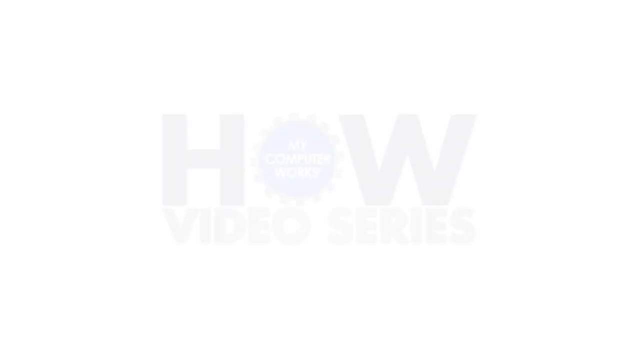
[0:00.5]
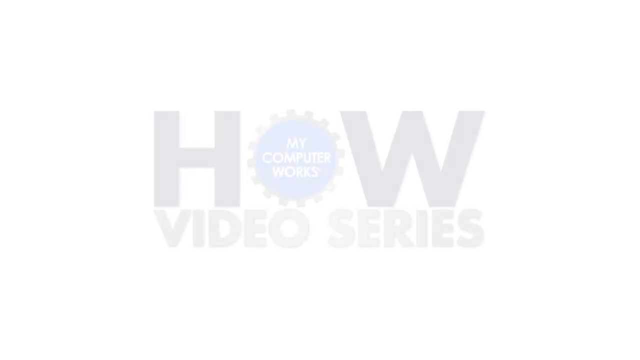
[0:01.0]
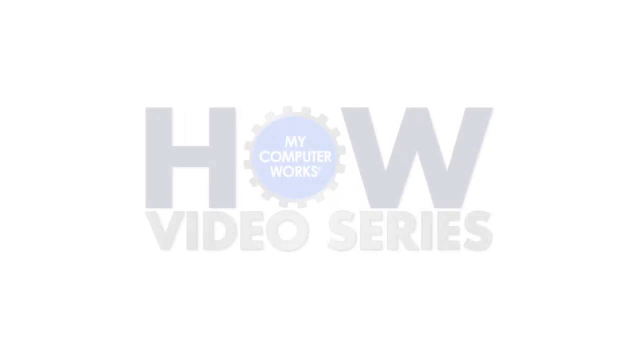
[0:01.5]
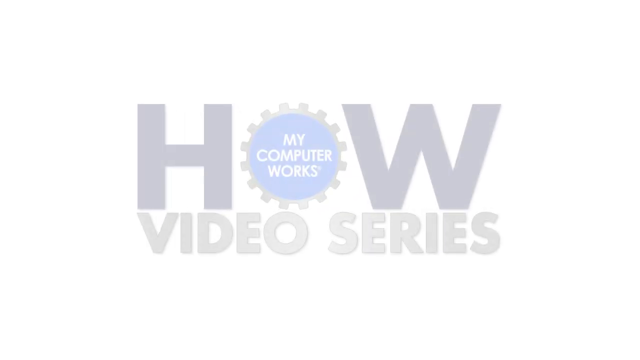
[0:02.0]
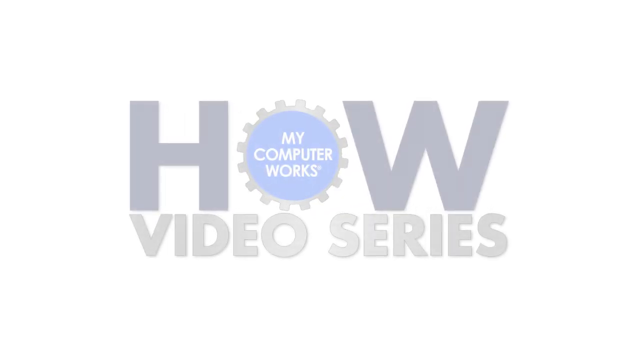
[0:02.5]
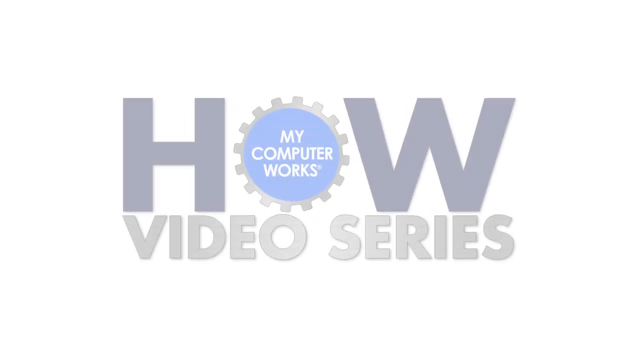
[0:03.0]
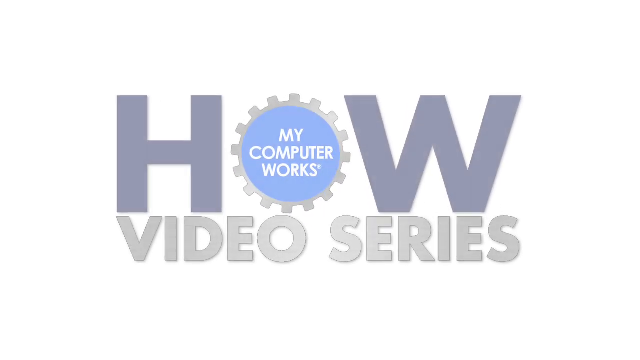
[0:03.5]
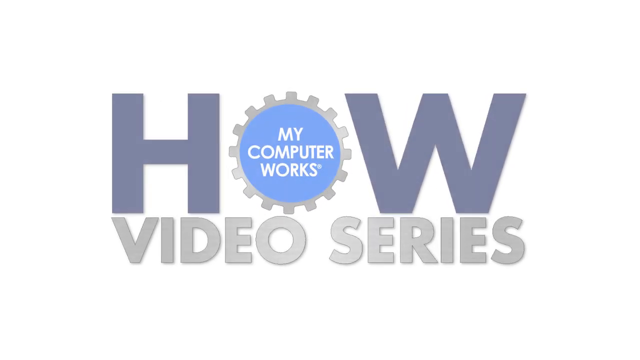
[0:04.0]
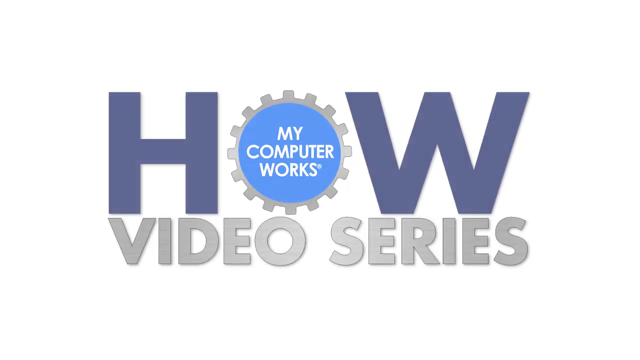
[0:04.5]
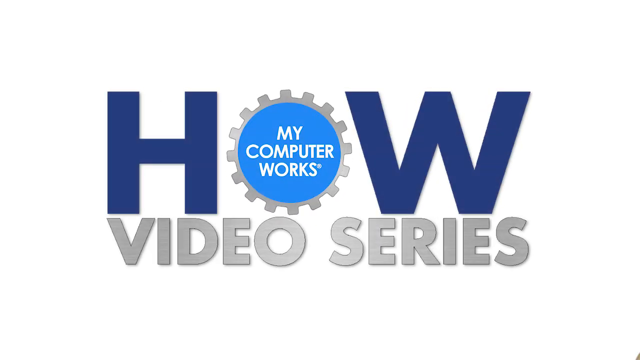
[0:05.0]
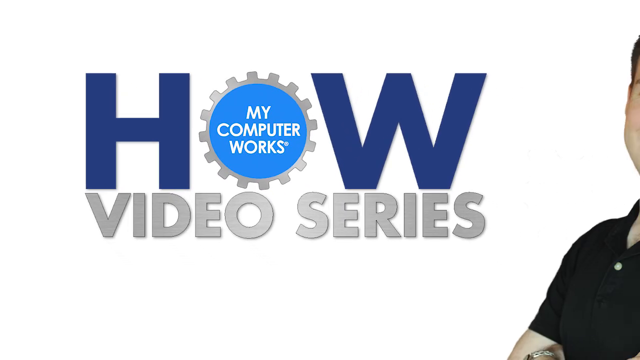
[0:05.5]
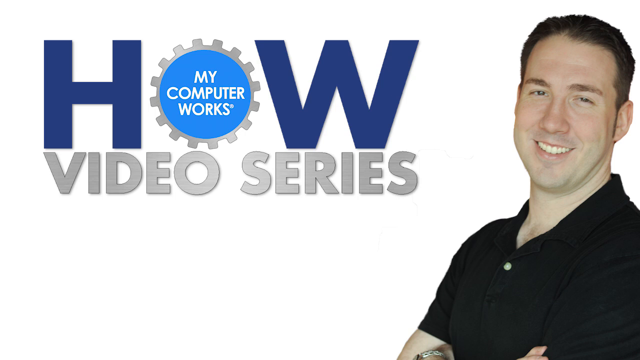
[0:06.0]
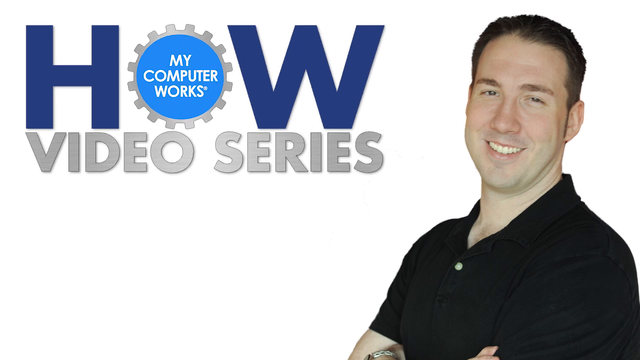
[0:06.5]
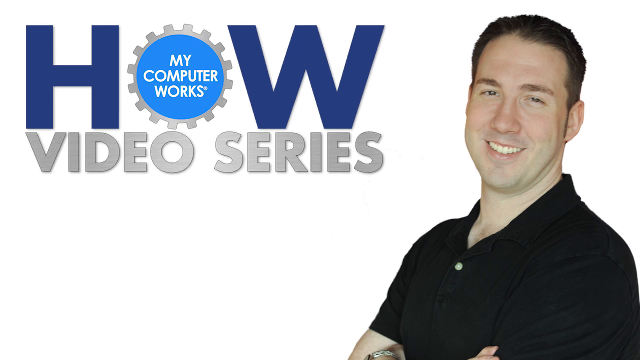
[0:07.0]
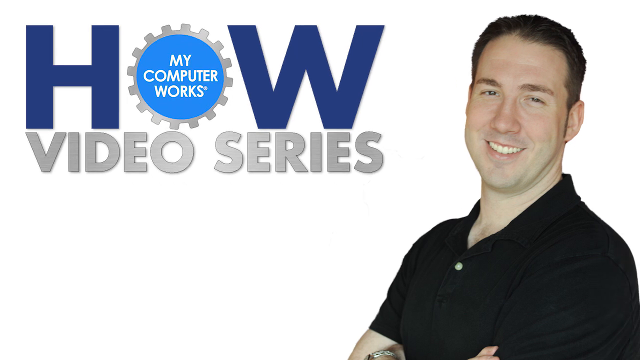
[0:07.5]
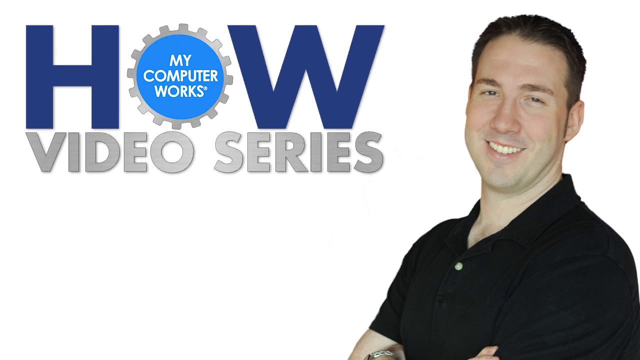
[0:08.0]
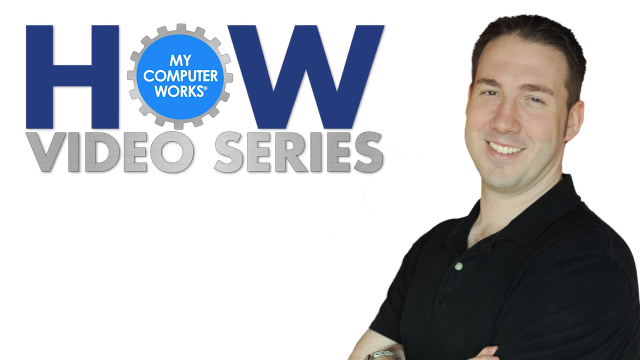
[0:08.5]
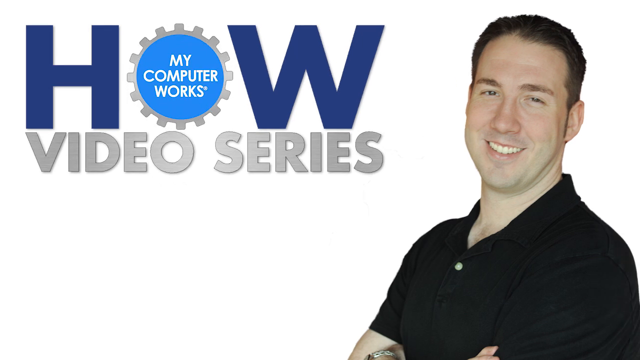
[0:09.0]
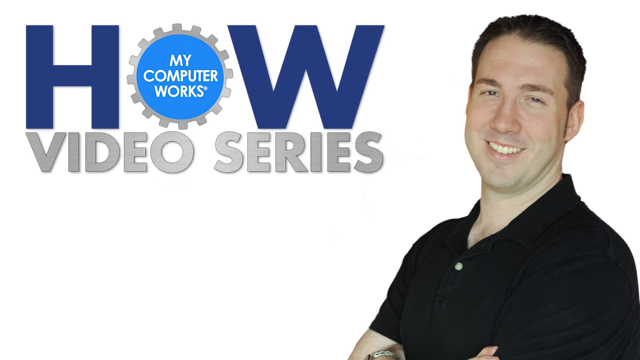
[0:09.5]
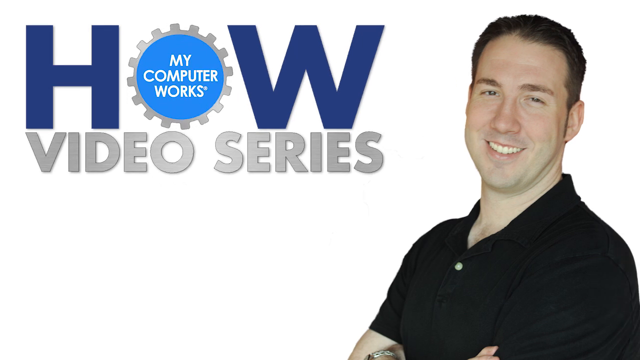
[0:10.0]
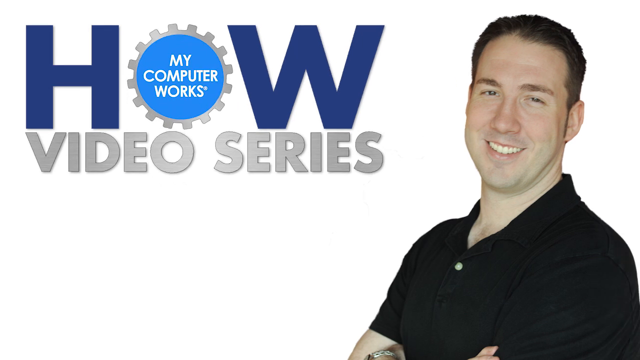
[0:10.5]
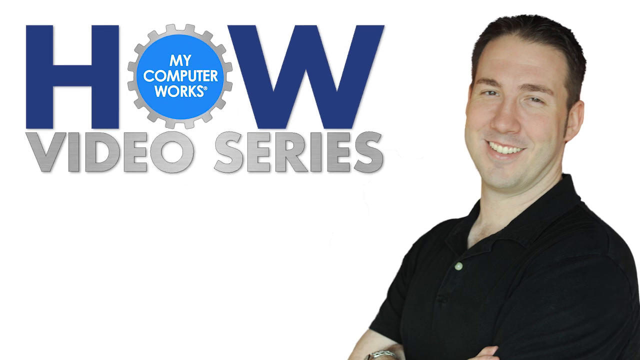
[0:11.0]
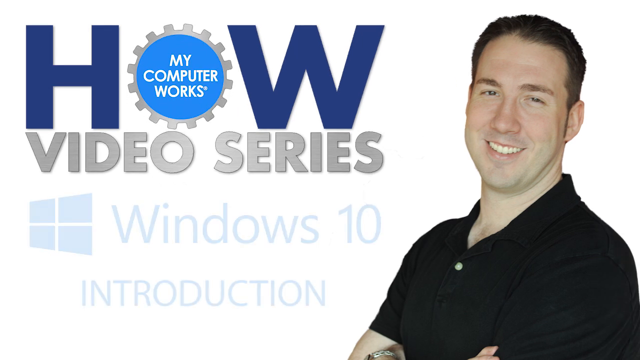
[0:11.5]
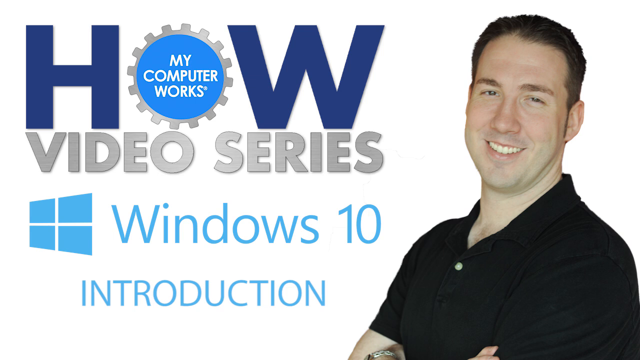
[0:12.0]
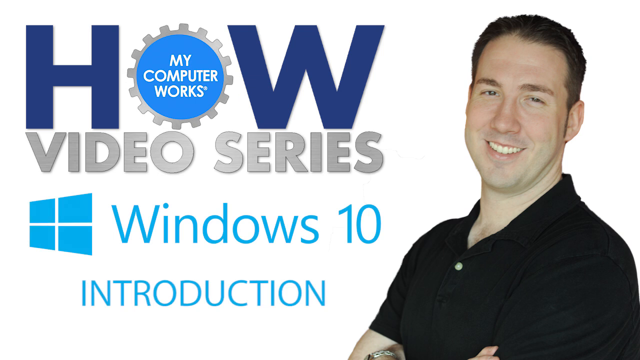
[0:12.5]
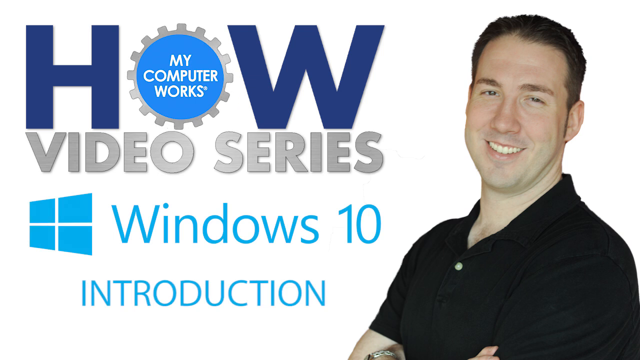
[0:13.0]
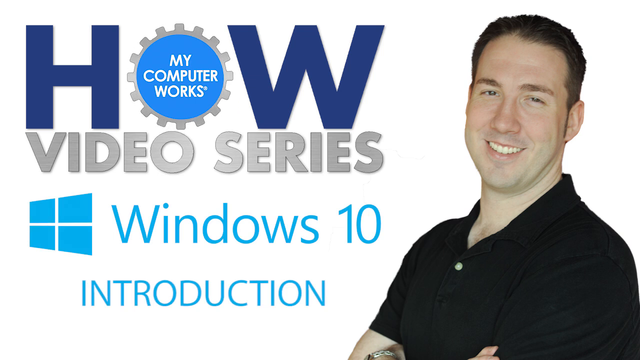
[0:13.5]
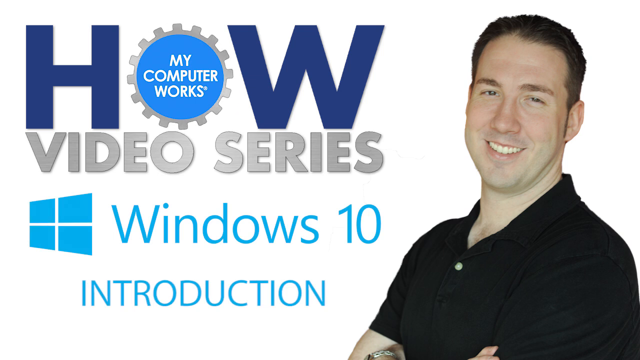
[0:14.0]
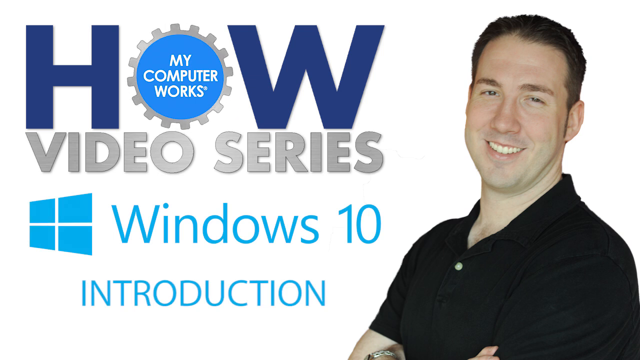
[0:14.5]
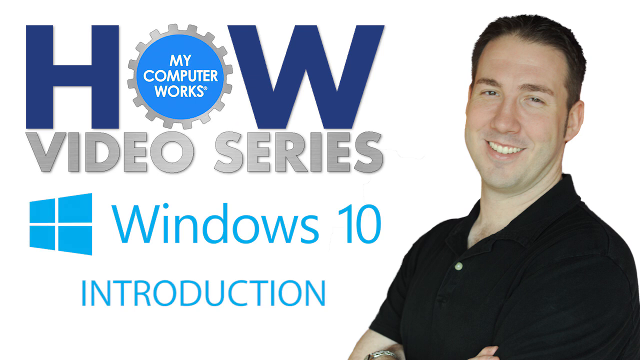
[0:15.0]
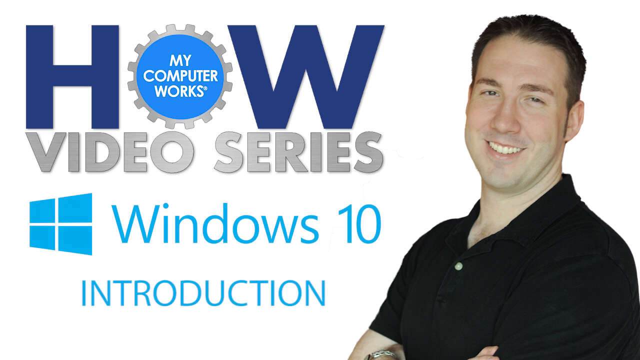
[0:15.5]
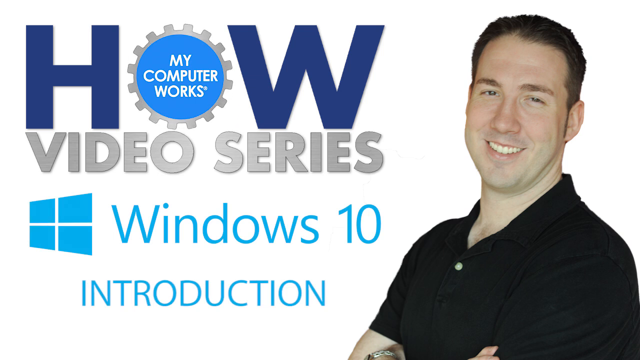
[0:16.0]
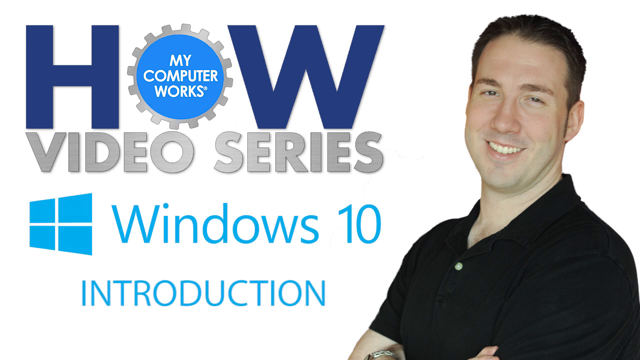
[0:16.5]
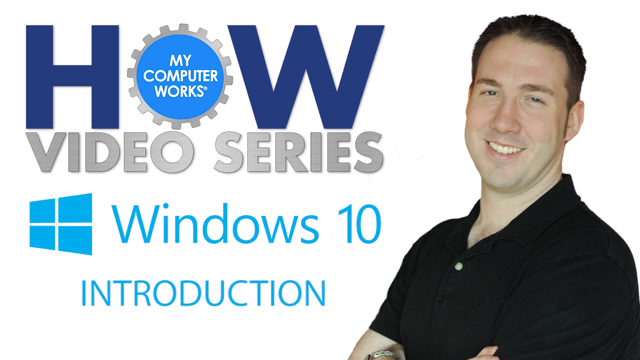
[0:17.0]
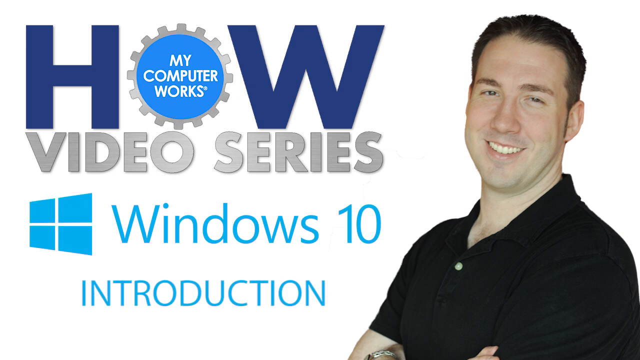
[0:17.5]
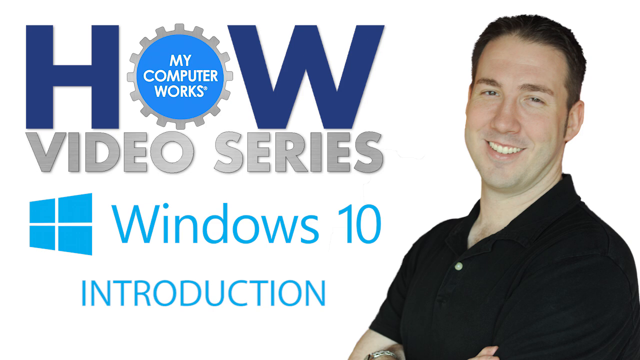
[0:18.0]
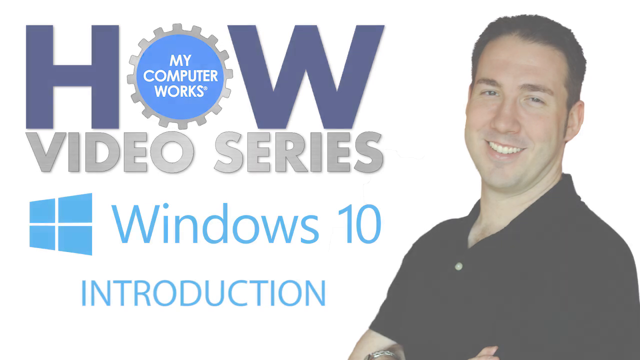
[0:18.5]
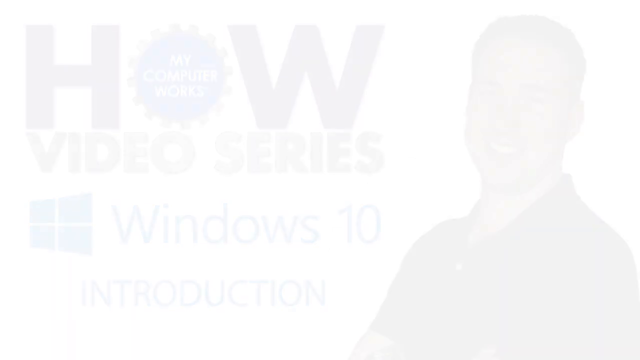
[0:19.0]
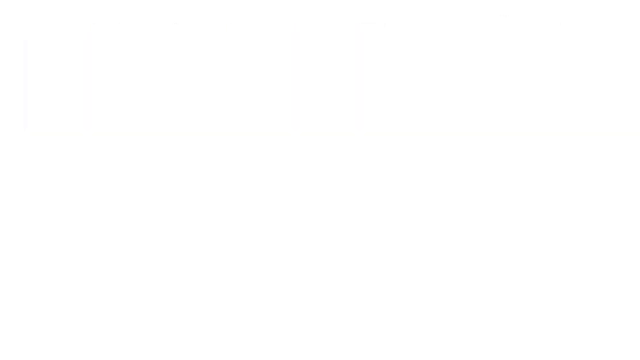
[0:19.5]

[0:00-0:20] The video opens on plain green with a gradation to black along the bottom. A logo fades in at the centre of the screen, growing larger. It says "How Video Series", with the O in How drawn as a cog, and the blue centre of the cog has "My Computer Works" written in white. The logo grows smaller and moves into the top left corner as a colour head-and-shoulders picture of a man appears on the right-hand side. He faces left but has his head turned towards the viewer, leaning back with his arms seemingly crossed. He is smiling, is white with brown hair, and wears a black polo shirt. The cog on the O turns clockwise. The H and the W are blue, and "Video Series" is rendered in a silver-effect font. Underneath this text the words "Windows 10 Introduction" appear in light blue next to a picture of the Windows logo in the same colour. The image then fades out to white.